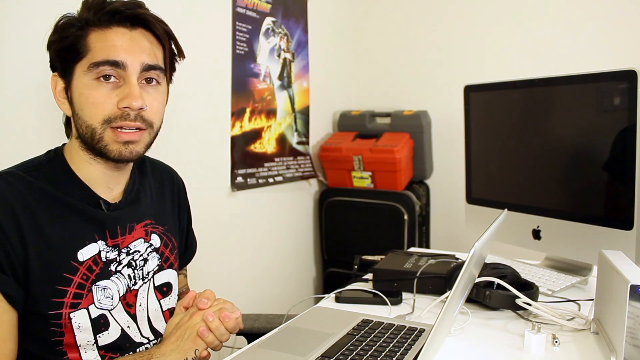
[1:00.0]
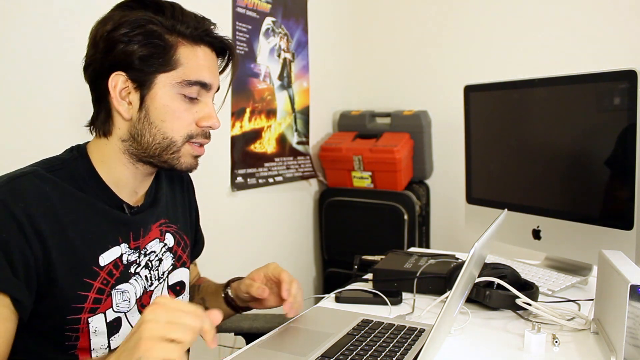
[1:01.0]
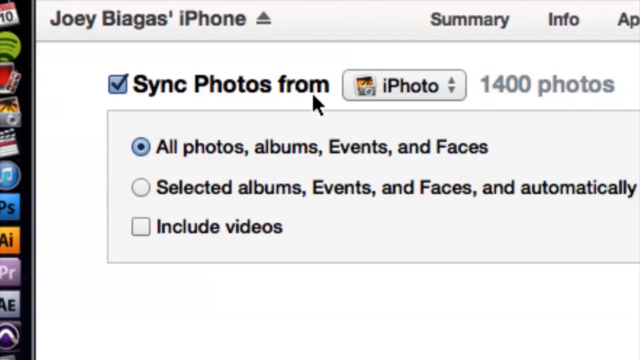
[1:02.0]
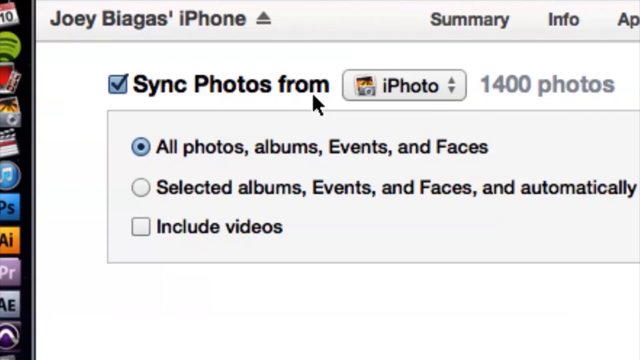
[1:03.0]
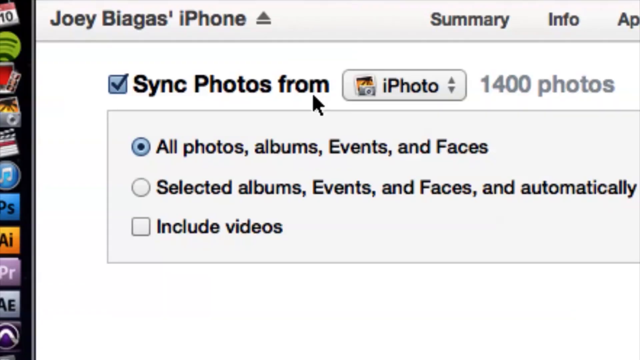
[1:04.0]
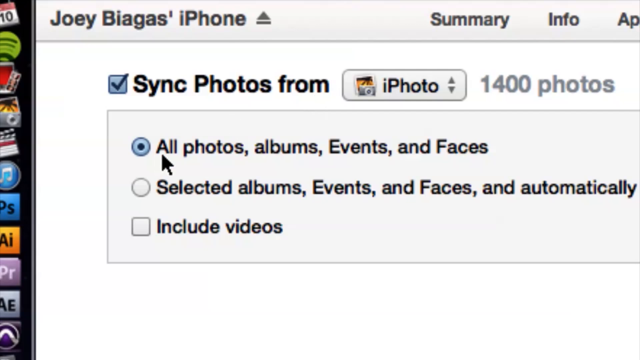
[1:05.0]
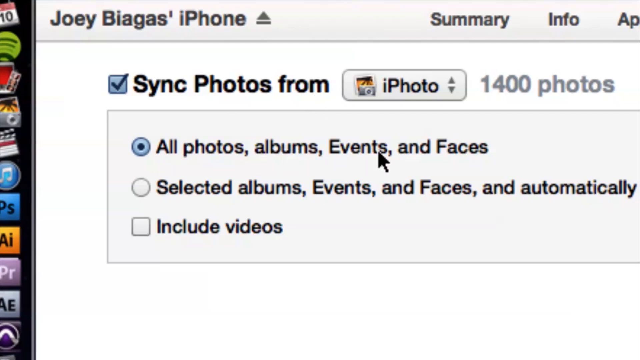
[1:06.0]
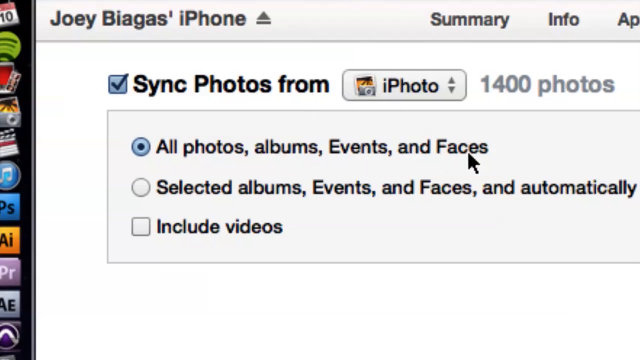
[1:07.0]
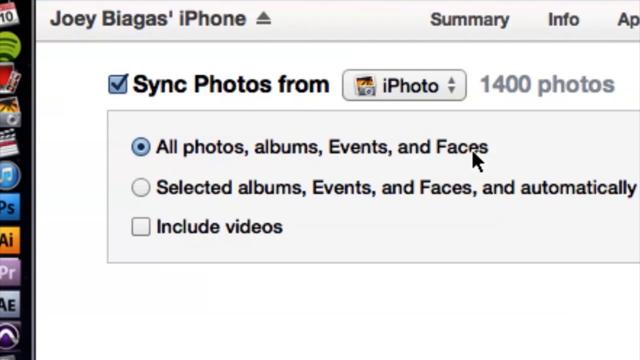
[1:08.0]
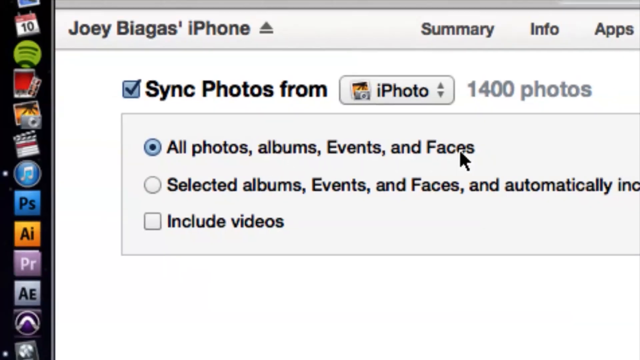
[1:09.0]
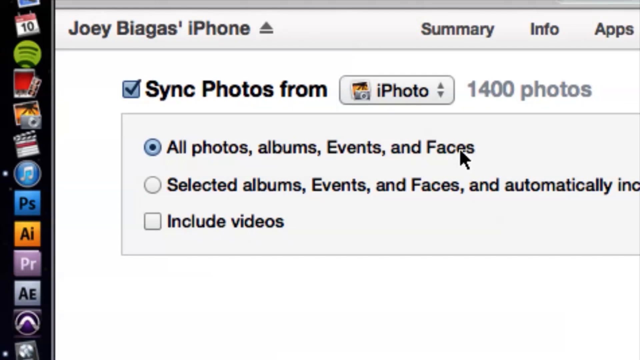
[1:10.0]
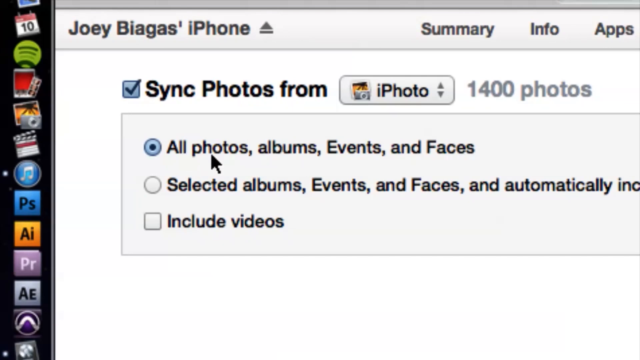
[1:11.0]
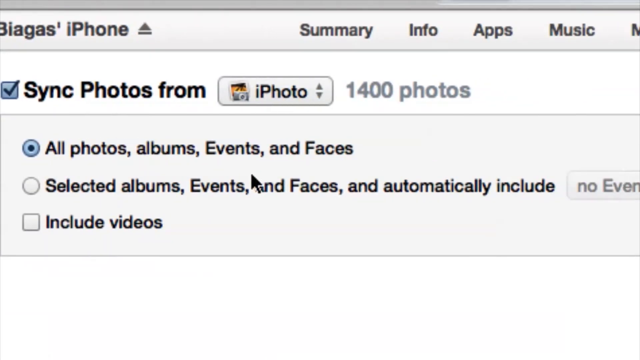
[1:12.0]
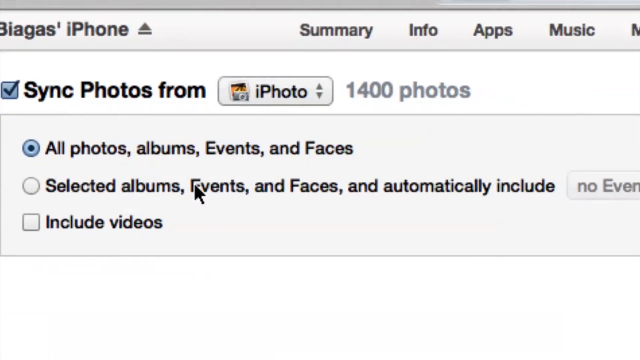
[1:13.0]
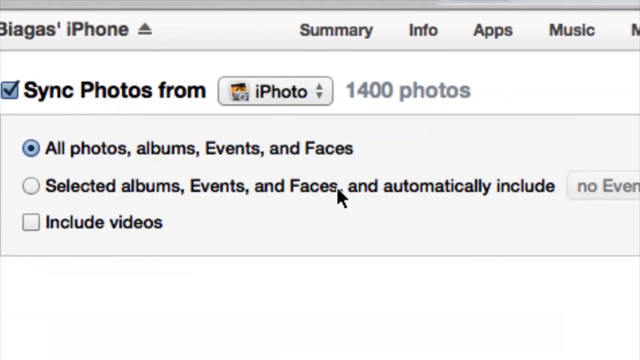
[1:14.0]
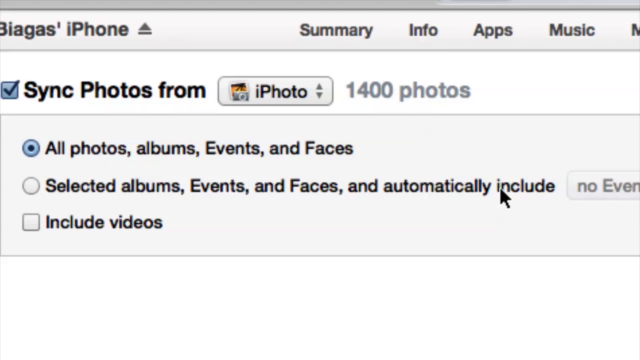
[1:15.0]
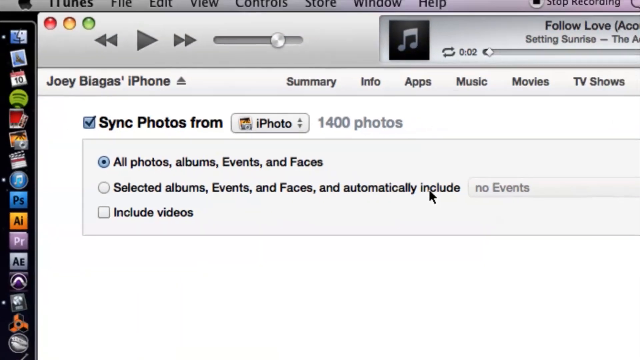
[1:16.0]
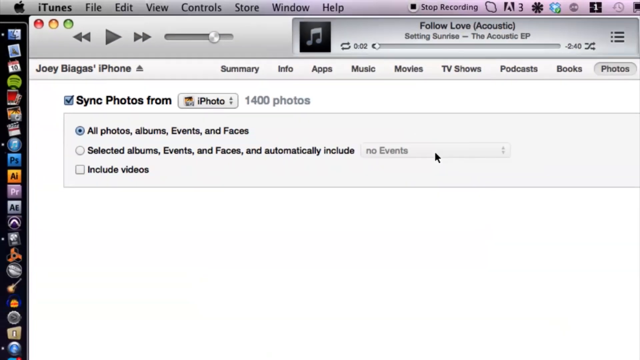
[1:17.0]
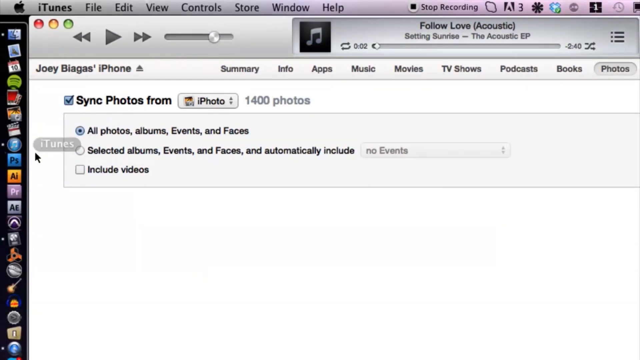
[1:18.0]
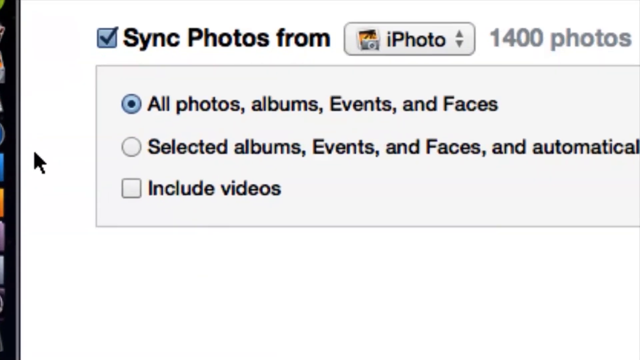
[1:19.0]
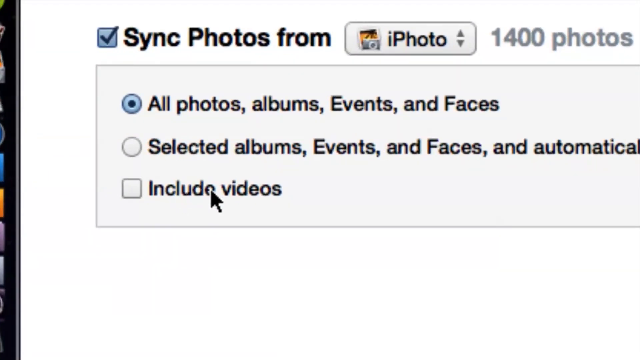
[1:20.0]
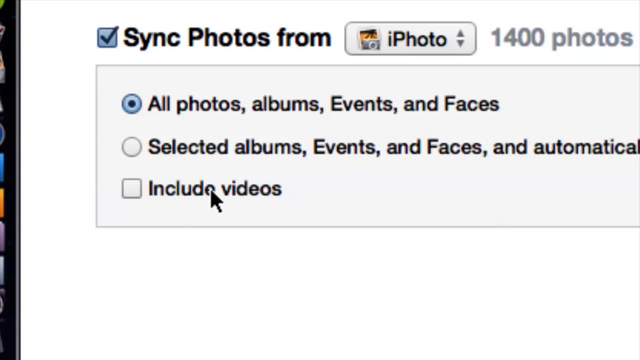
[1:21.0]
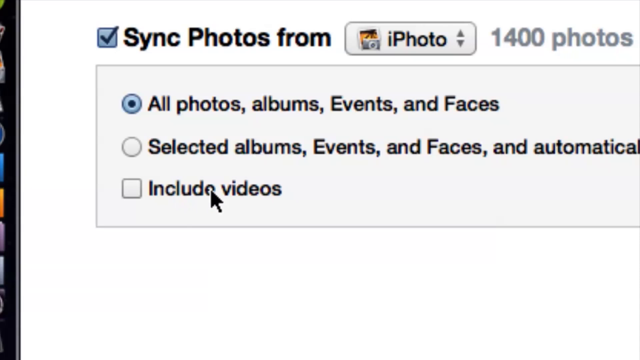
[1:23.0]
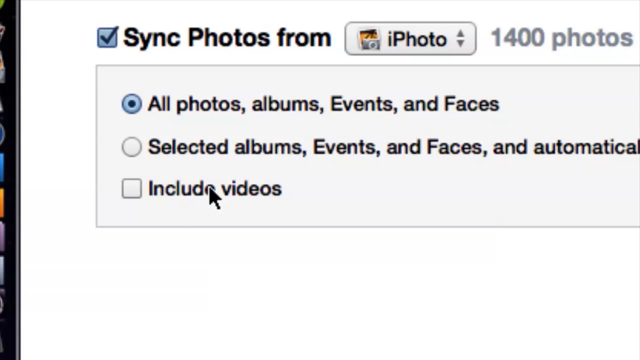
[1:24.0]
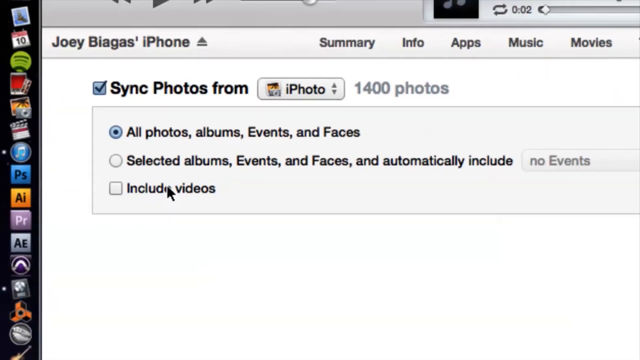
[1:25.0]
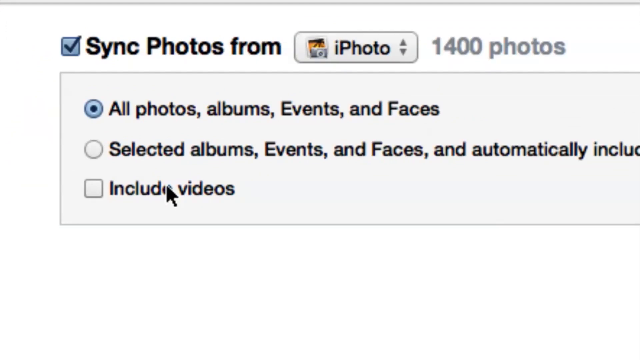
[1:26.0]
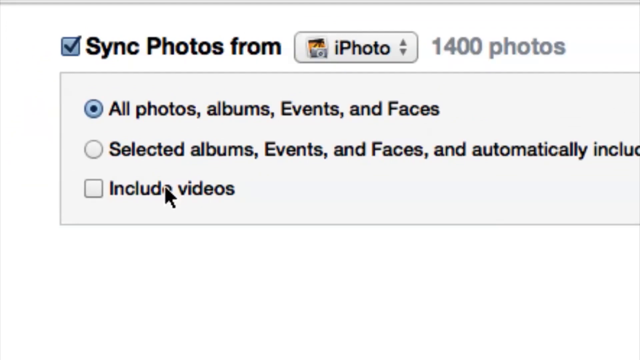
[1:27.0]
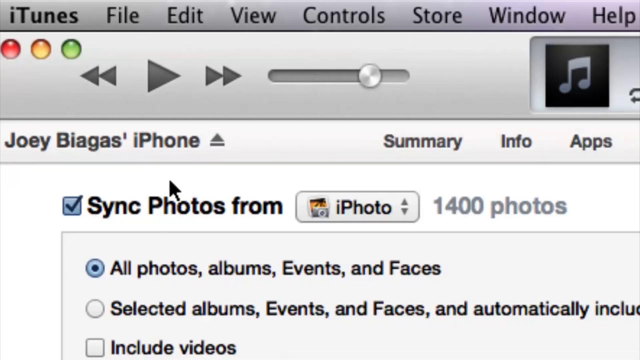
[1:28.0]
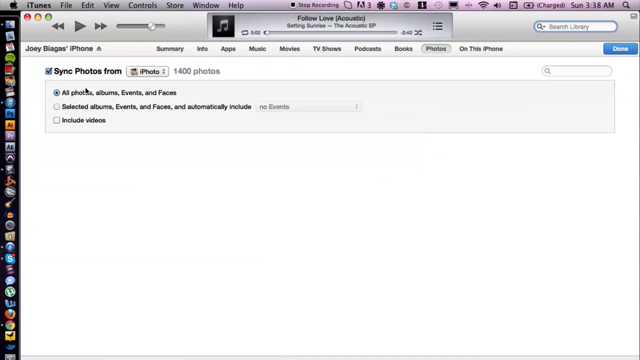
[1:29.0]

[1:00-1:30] The YouTuber goes through the options: all photos, albums, events and faces; selected albums, events and faces, and automatically include; and include videos. He zooms in and out so everything on the screen can be seen, seeming to go through the necessary options clearly, step by step.